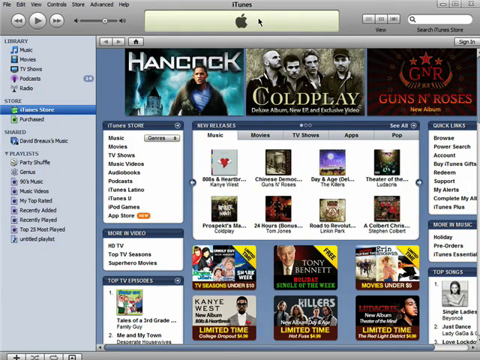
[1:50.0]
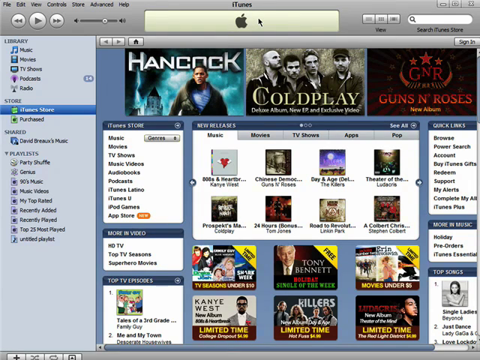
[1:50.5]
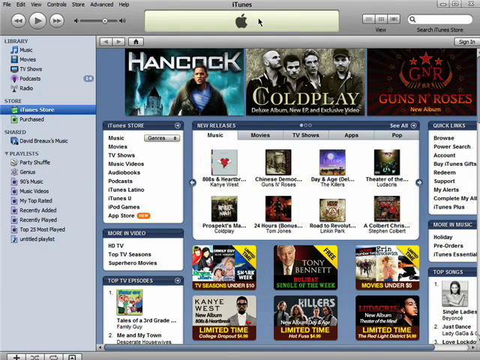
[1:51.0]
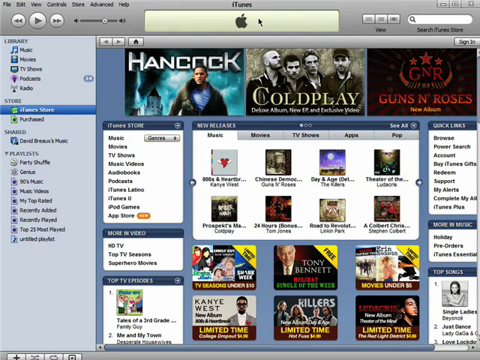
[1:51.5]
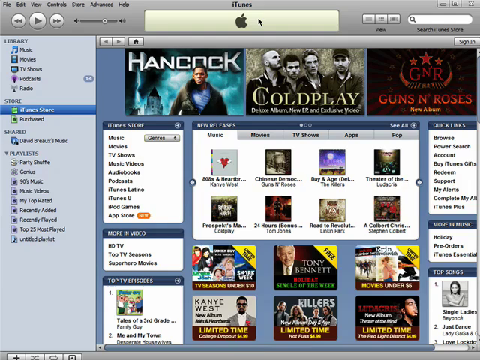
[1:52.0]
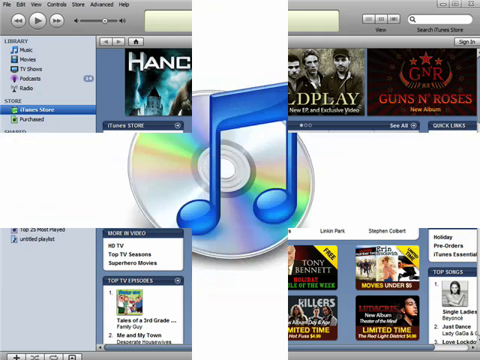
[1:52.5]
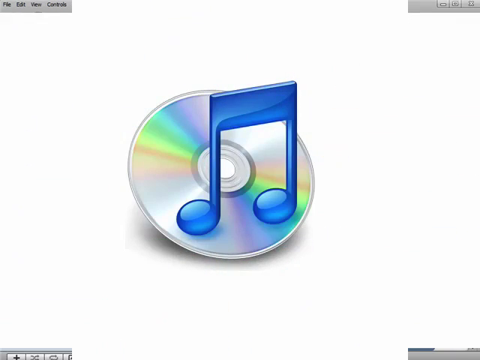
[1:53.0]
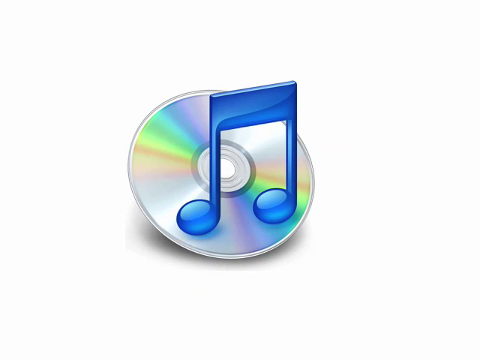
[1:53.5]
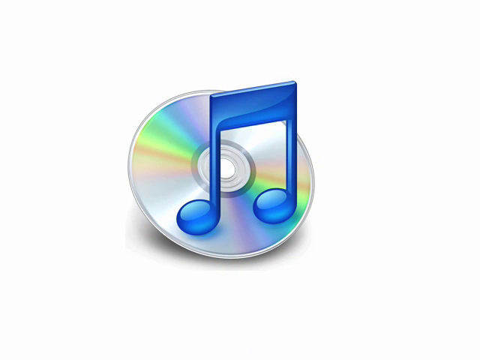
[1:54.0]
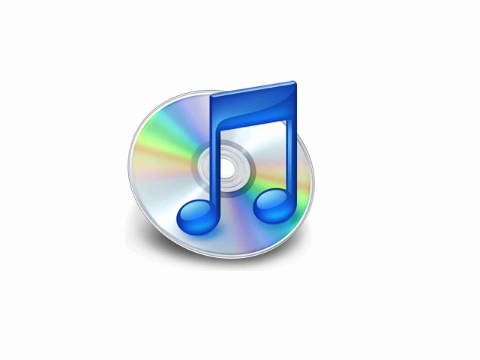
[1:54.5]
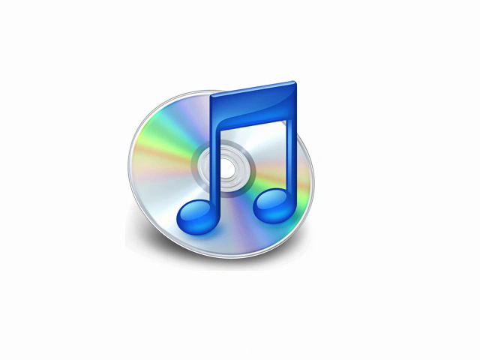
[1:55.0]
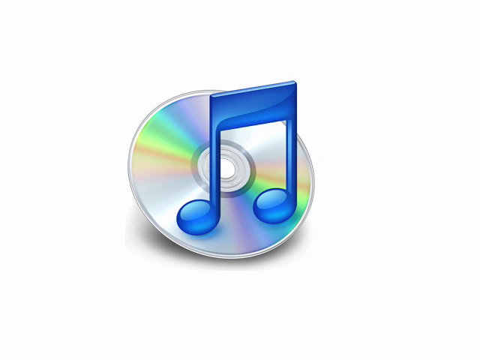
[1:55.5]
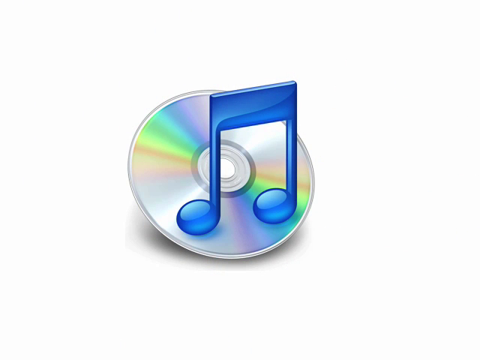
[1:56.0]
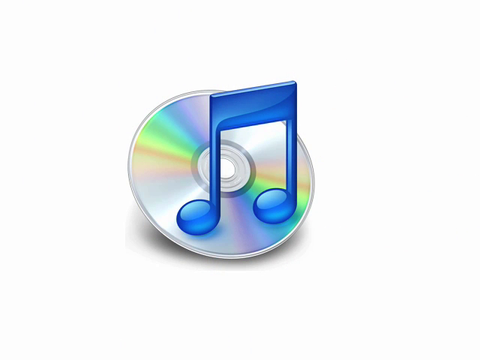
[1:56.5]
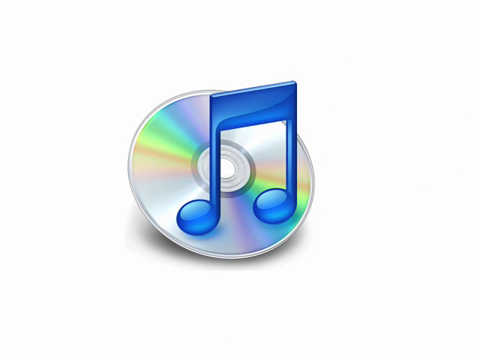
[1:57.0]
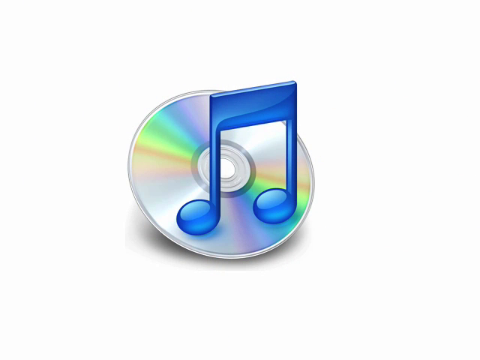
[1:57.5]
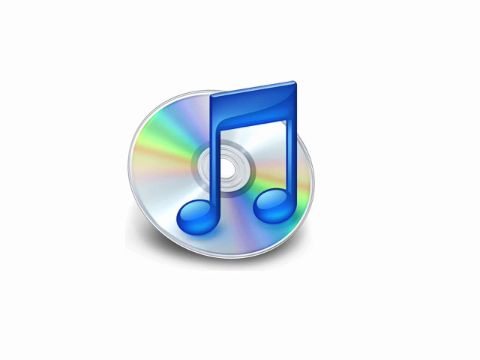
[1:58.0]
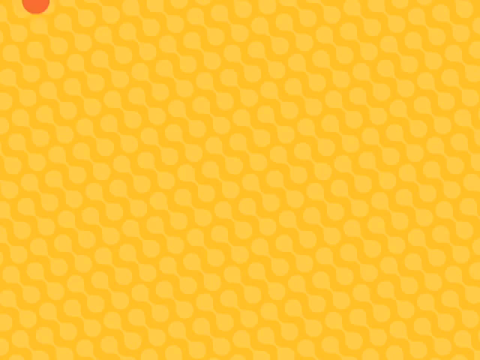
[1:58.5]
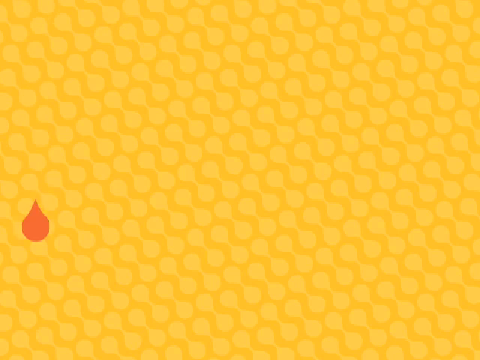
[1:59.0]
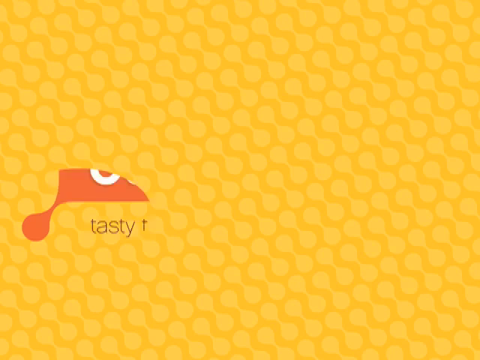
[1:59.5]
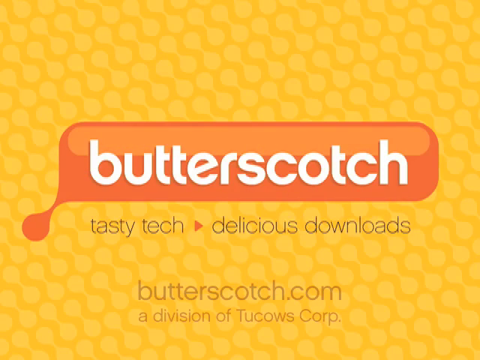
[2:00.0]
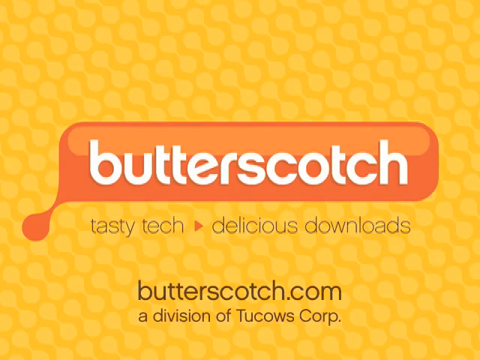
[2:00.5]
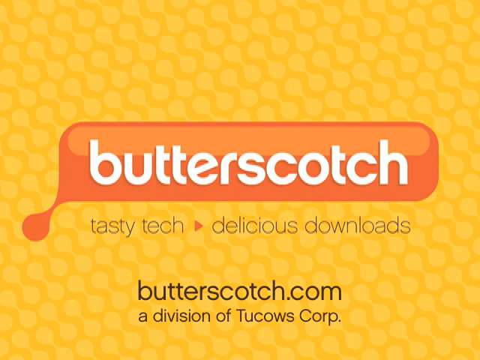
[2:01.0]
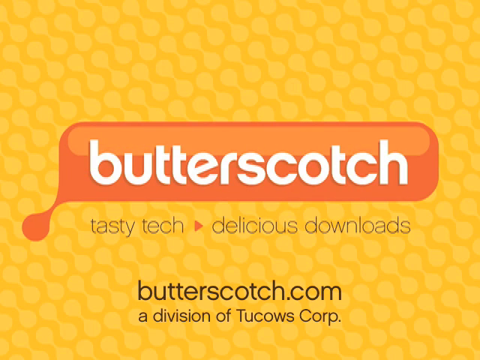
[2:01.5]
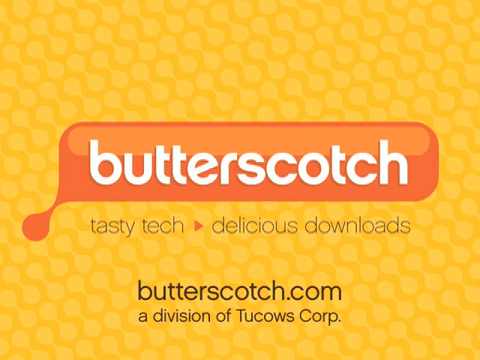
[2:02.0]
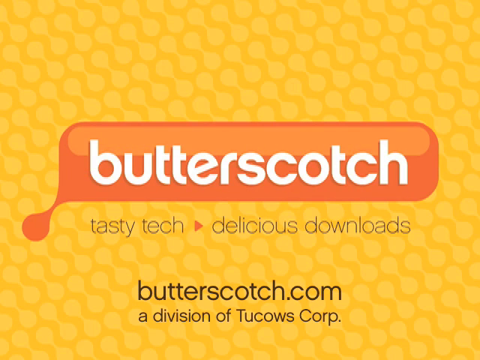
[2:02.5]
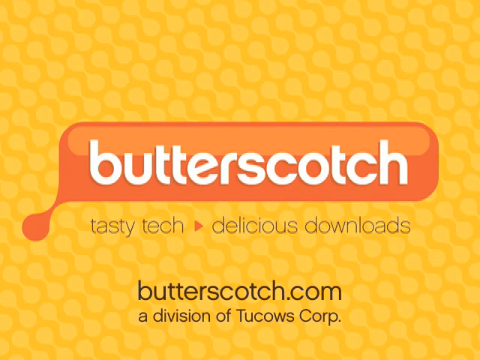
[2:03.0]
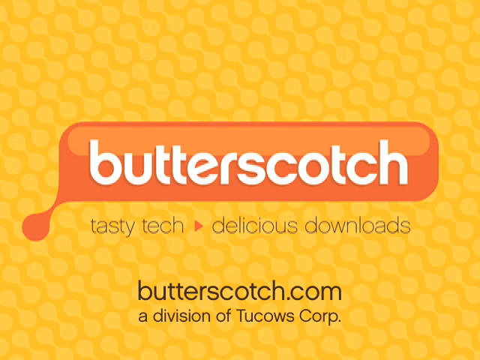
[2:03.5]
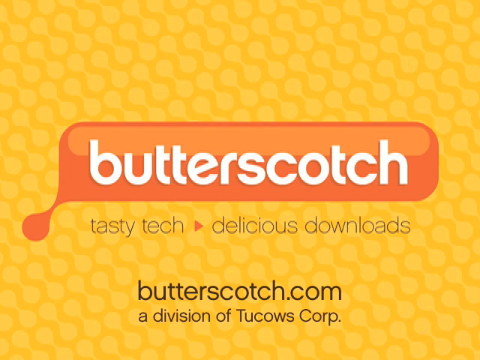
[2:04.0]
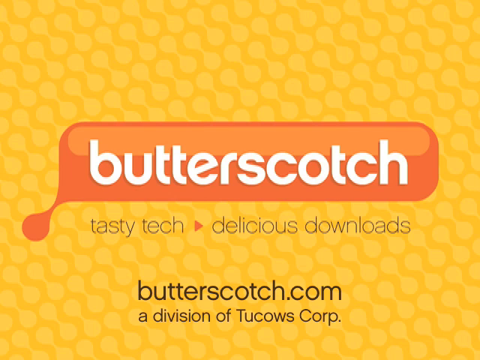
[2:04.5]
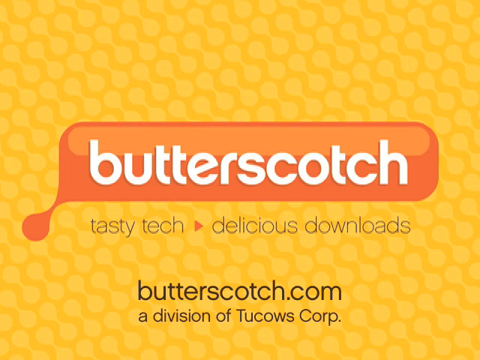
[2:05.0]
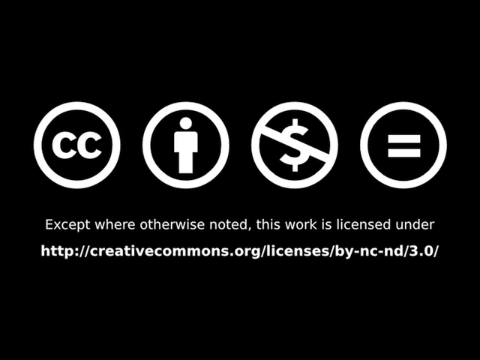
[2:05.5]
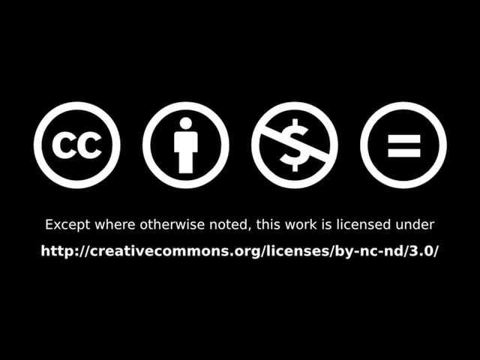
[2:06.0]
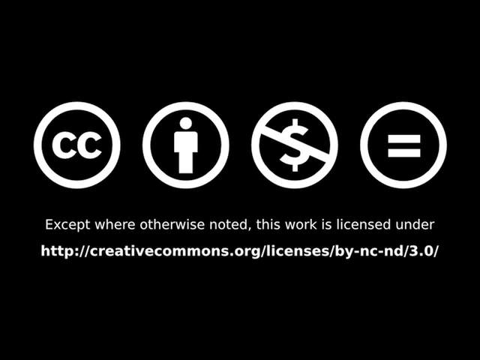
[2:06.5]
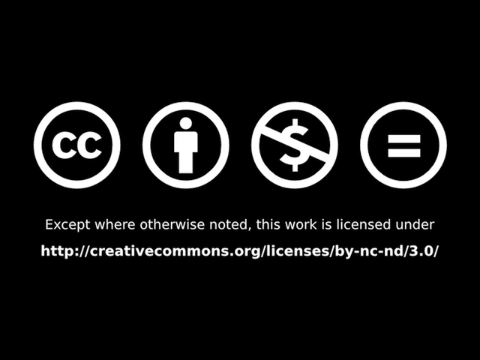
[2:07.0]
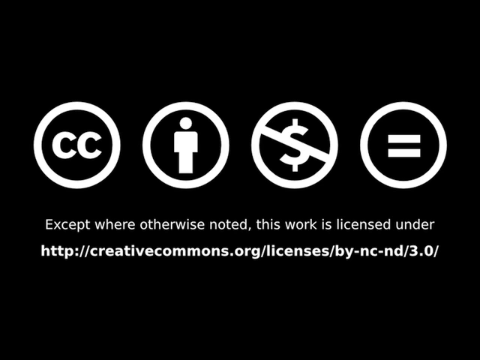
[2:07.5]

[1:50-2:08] The person is now in the iTunes Store after installing it. In the upper left-hand corner are menu words such as File, Edit, View, Controls, possibly Store, Advanced and Help, somewhat blurry. In the middle it says "iTunes" with the Apple logo underneath. It says "View," and on the right-hand side is an oval search box reading "Search iTunes Store." The left side lists Library with Music, Movies, TV Show, Podcast and Radio; iTunes Store; Purchase; a music entry starting with David; Share; Party Shuffle; and, partly visible, what looks like 90s Music, Music Videos, My Top Rated, Recently Added, a "Played" list, Top 25 Most Played and Tiger Playlist. The iTunes Store section lists Music, Movies, TV Show, Music Videos, Audiobooks, Podcasts, iTunes U, iPod Games and App Store, and features Tony Bennett, Kanye West, Hancock, Coldplay and Guns N' Roses. The screen clears to show the disc with a blue double music note, and then text reads "Butterscotch, tasty tech, delicious download, butterscotch.com."